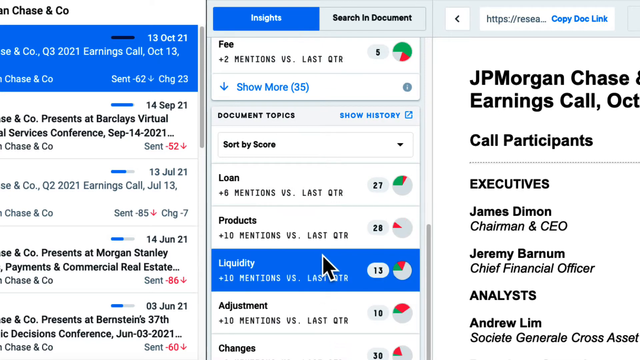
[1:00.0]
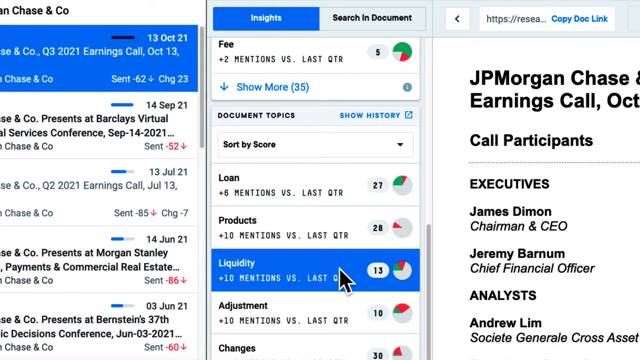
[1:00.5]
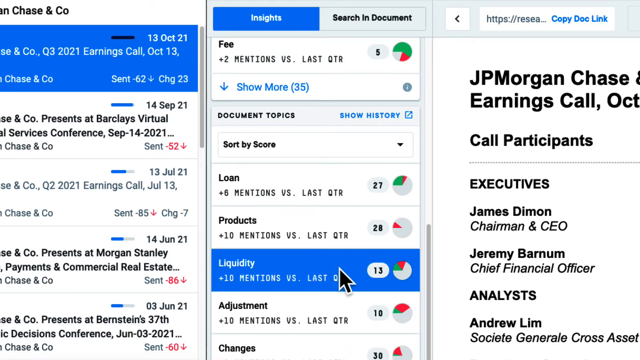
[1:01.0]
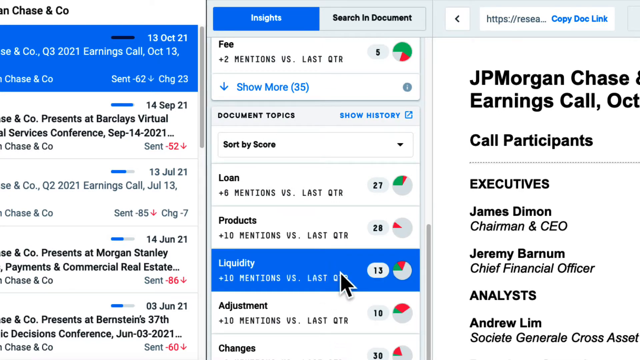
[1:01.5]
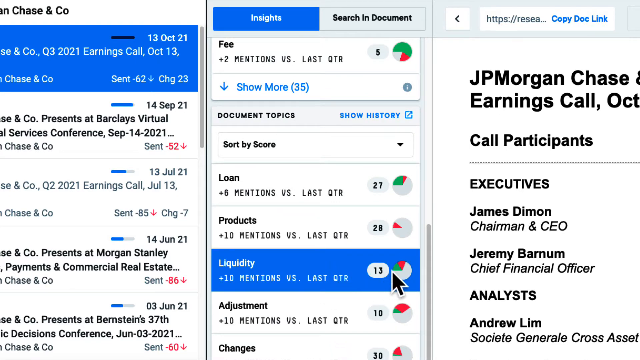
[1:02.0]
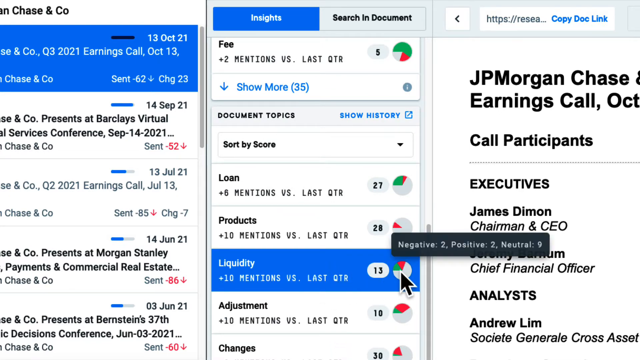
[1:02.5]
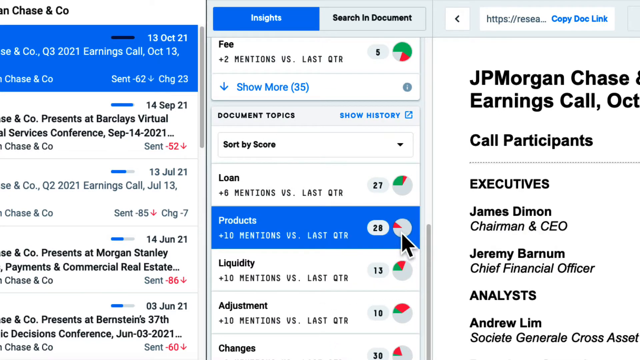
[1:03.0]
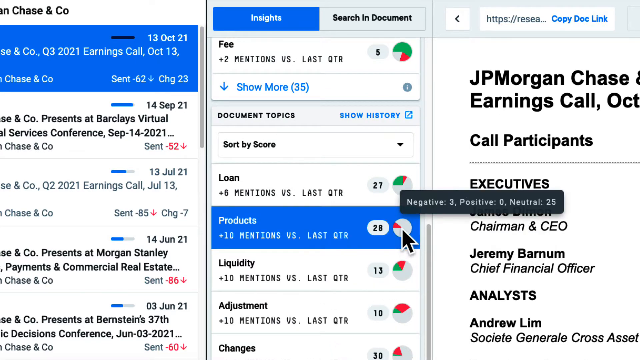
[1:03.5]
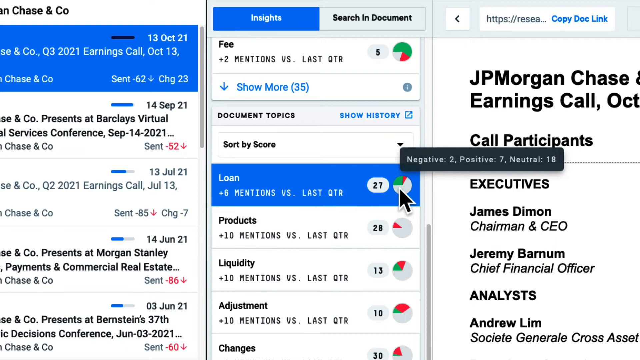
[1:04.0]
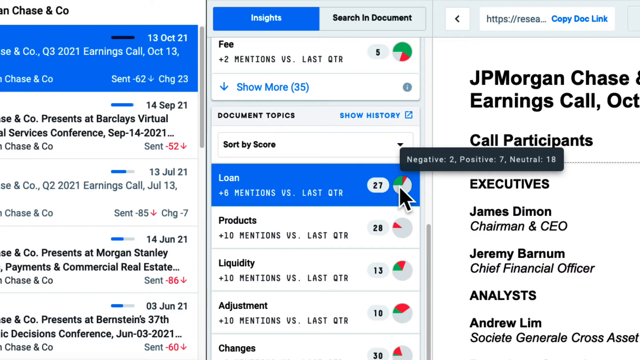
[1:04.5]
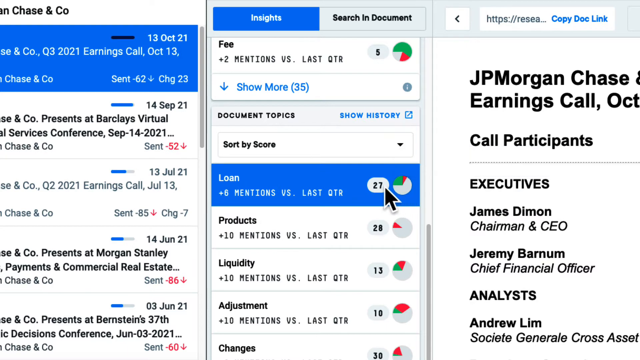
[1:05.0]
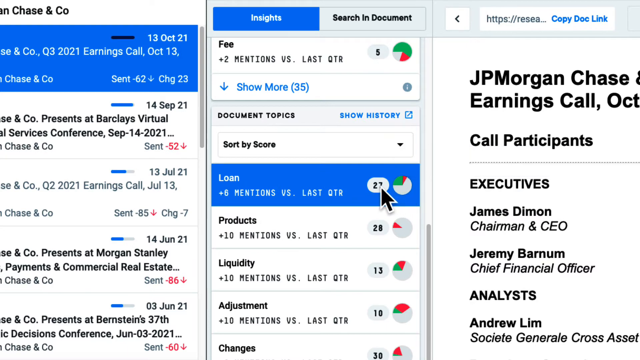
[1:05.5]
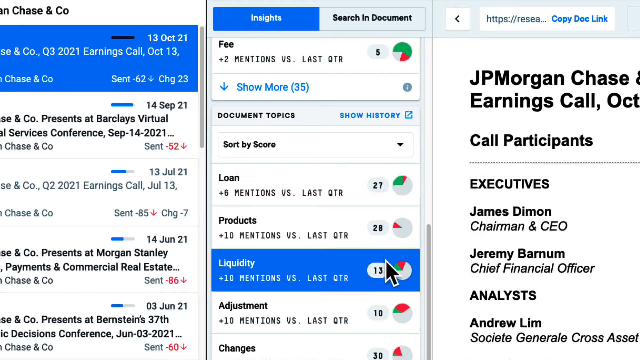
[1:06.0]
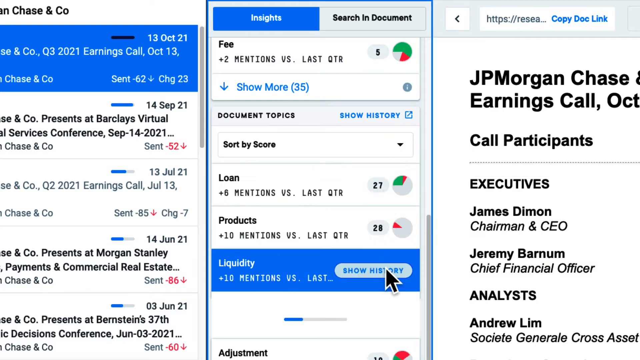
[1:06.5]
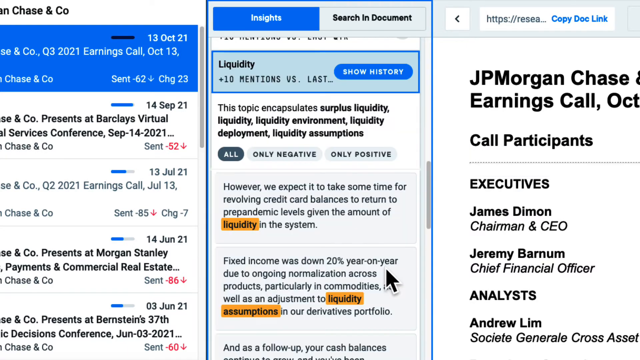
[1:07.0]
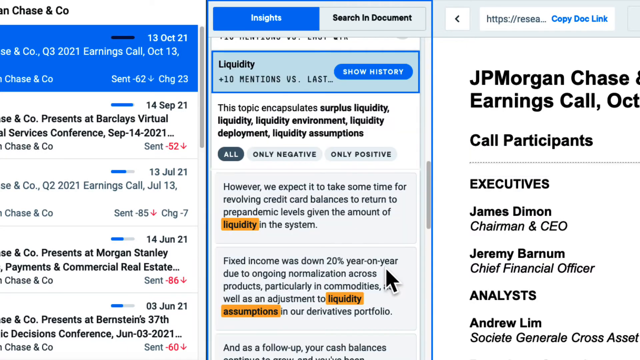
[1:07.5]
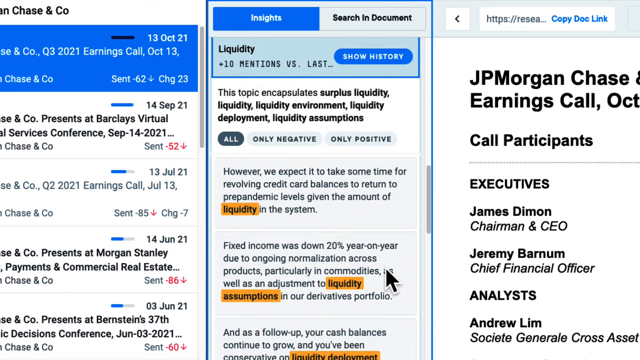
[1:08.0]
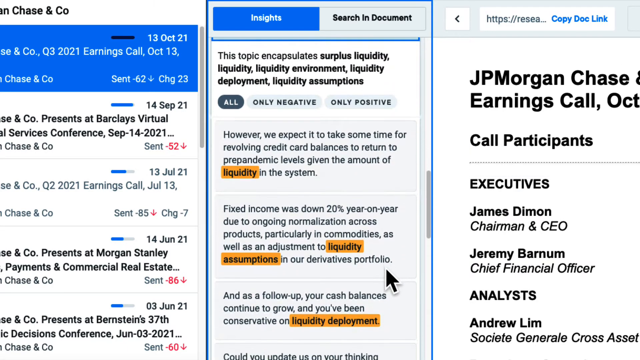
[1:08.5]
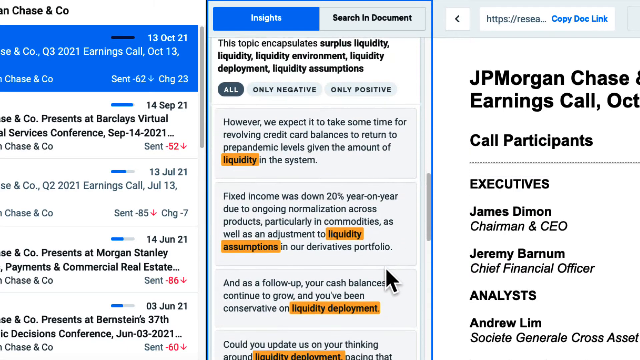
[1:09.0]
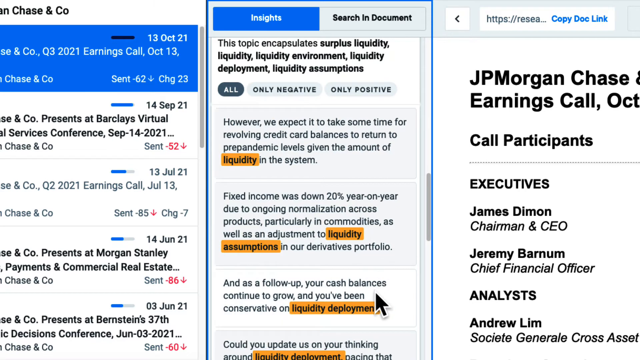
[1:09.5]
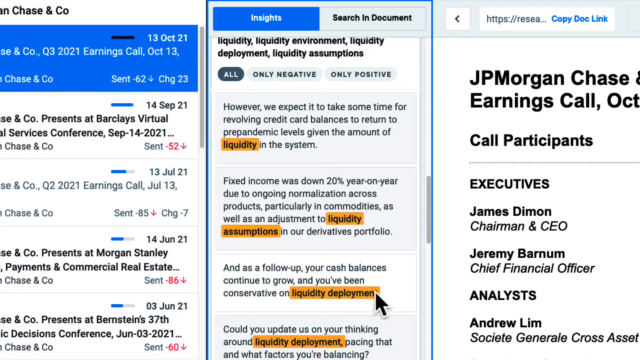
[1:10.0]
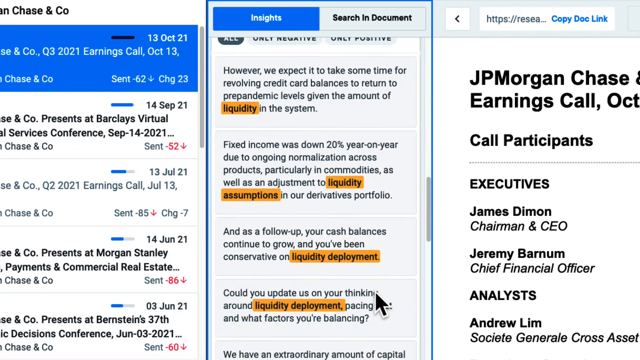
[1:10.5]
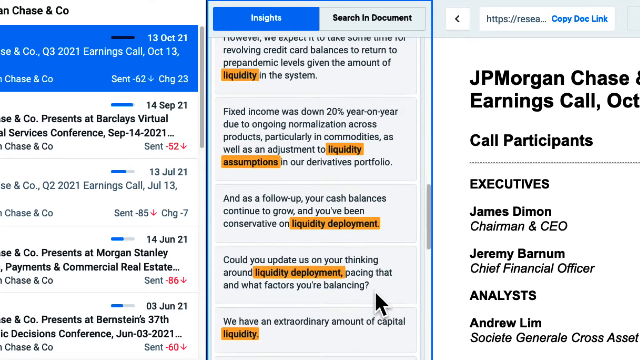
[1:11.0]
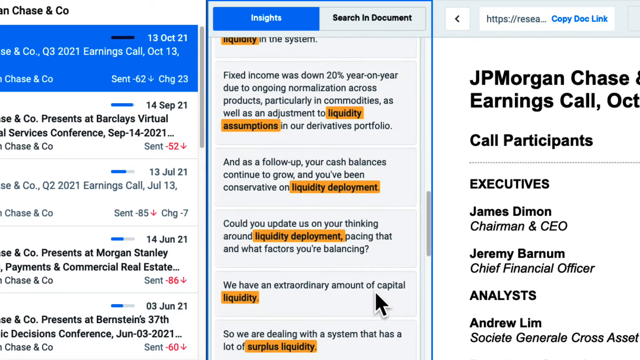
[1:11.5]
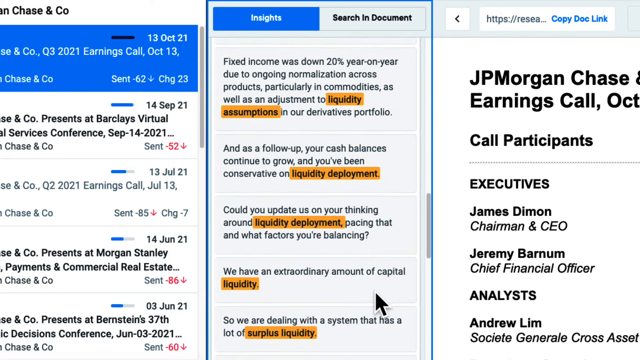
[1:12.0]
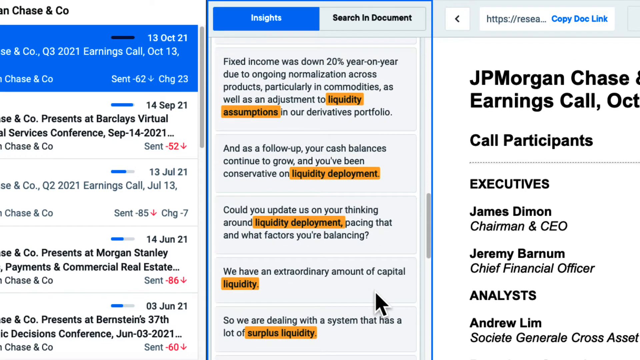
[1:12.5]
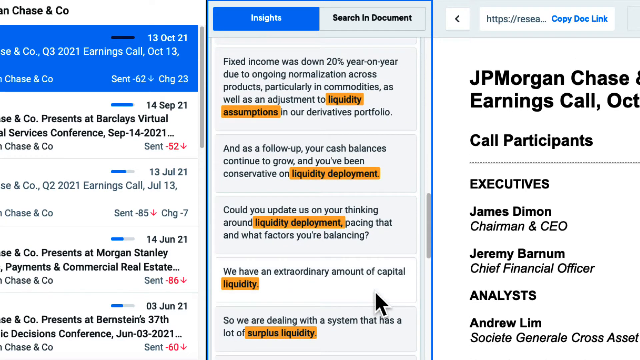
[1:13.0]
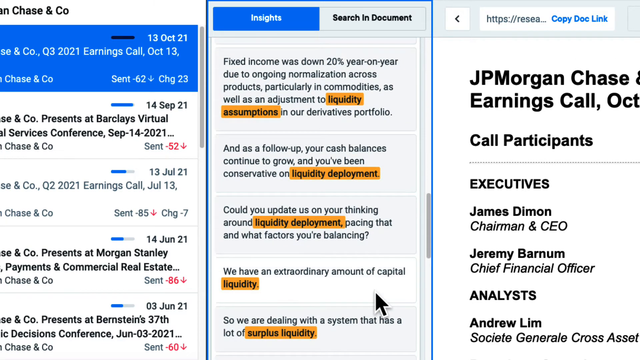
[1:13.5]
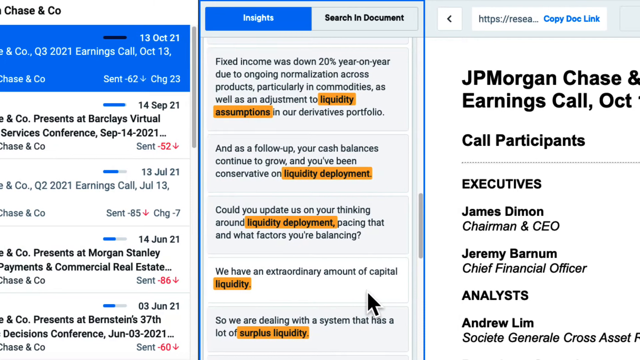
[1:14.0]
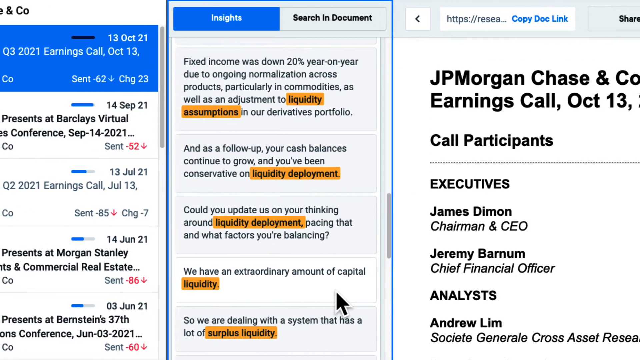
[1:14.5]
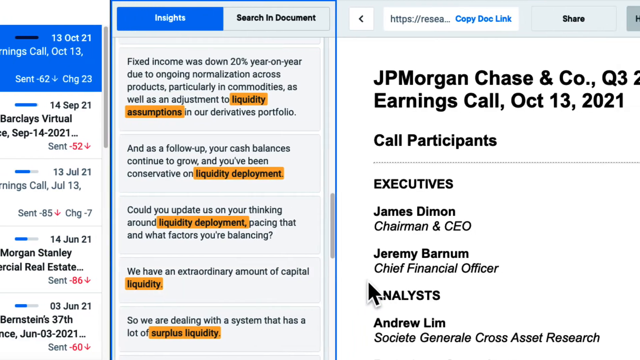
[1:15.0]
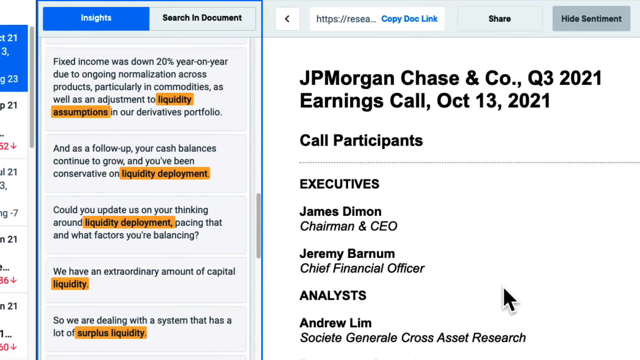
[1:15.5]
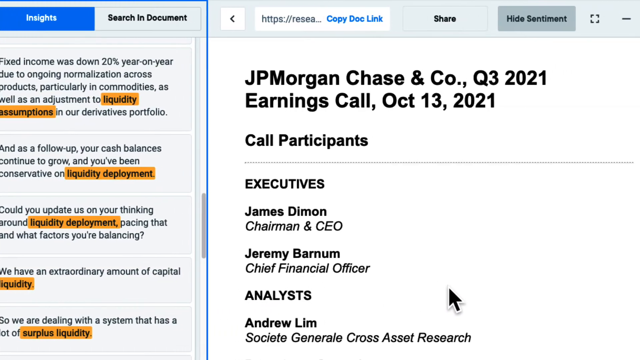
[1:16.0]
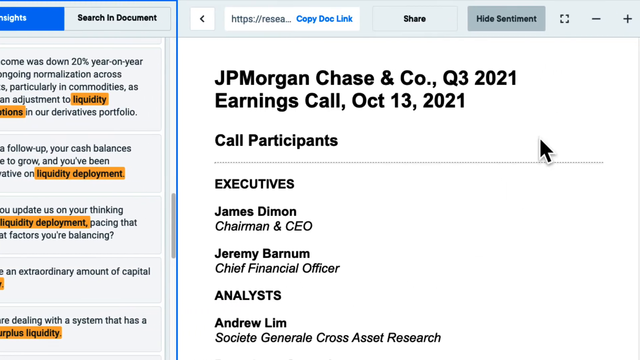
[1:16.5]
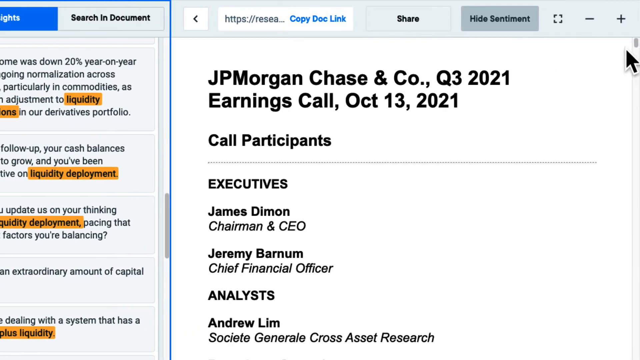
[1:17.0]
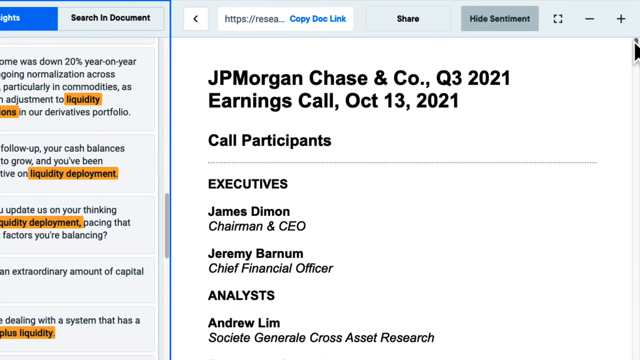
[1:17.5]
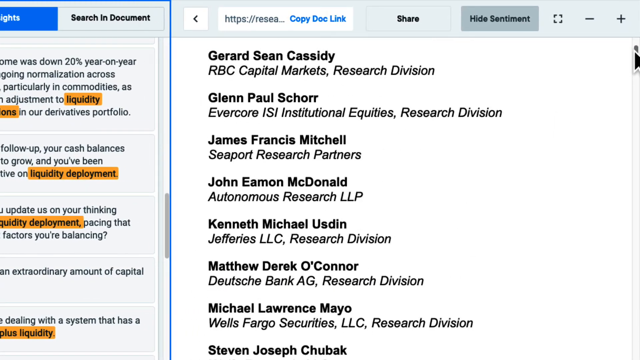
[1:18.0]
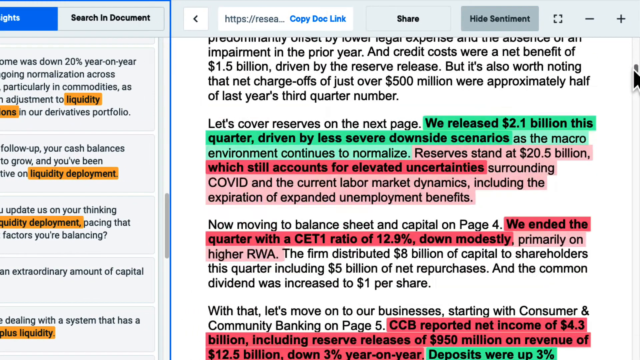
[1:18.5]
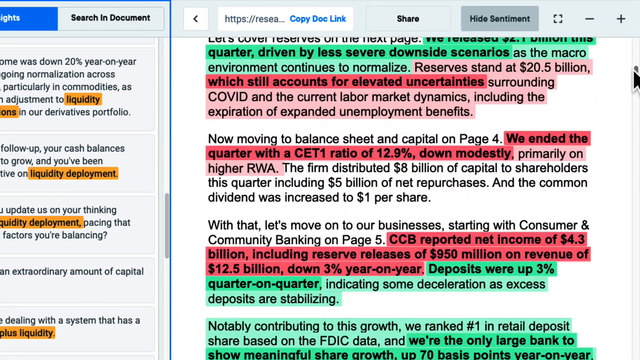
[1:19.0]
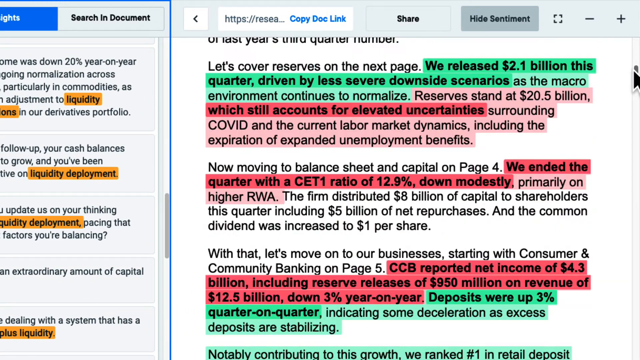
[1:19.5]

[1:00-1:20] The blue box under the insights section is clicked; it says "loan, plus six mentions versus last quarter." The number to the right of it is 27, beside a pie chart that is about 67% light gray, with a small sliver of red and one-fourth green. Next, liquidity is clicked, and the word liquidity is highlighted in yellow in various places in the text below, probably with a Control-F function. The view moves to the right side, where there is a lot of text, and scrolls down to an area with green and red highlights. The green highlight at the top says "we released 2.1 billion this quarter driven by less severe downside scenarios." In dark red below it says "which still accounts for elevated uncertainties." Another dark red section says "we ended the quarter with a CETI ratio of 12.9% down modestly," and another red section below says "the CCB reported net income of $4.3 billion including reserve releases of $950 million on revenue of $12.5 billion down 3% year on year."